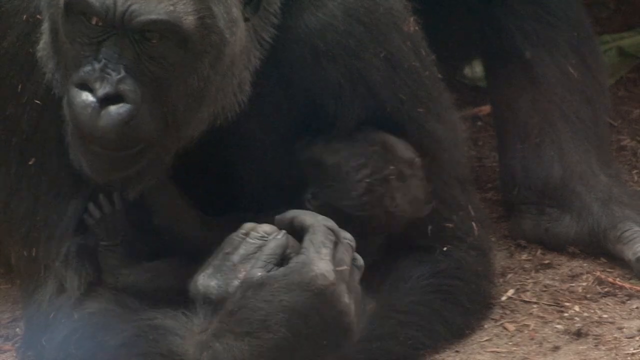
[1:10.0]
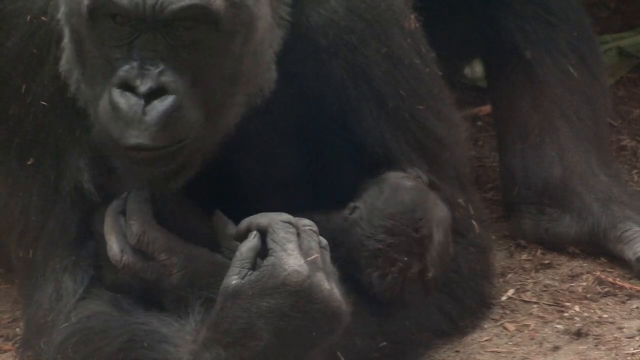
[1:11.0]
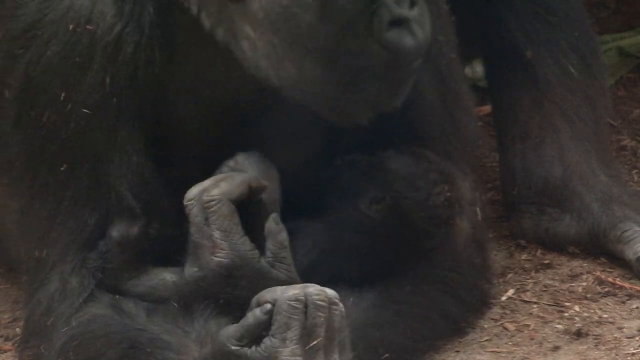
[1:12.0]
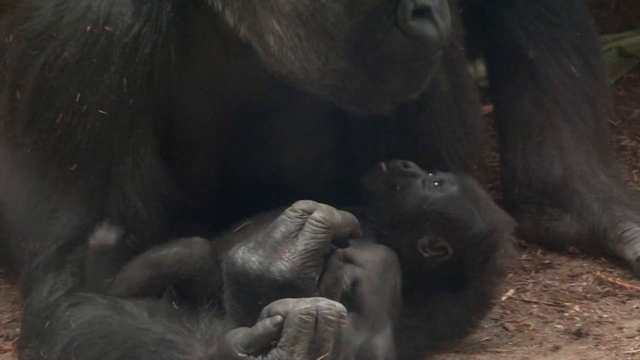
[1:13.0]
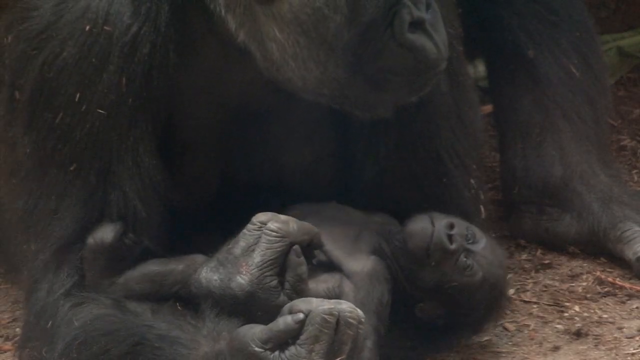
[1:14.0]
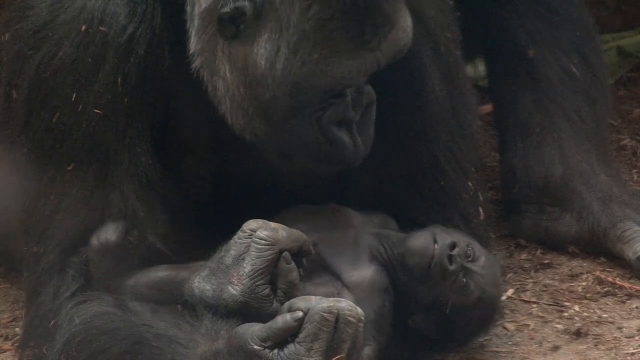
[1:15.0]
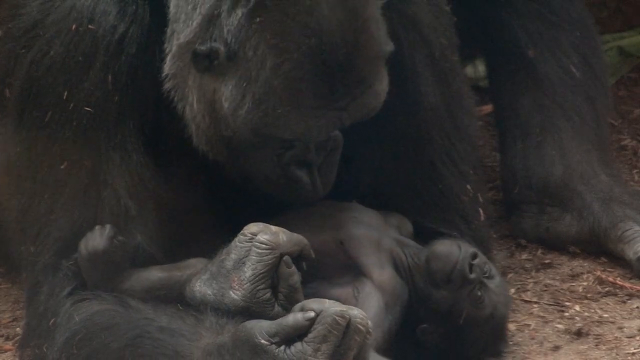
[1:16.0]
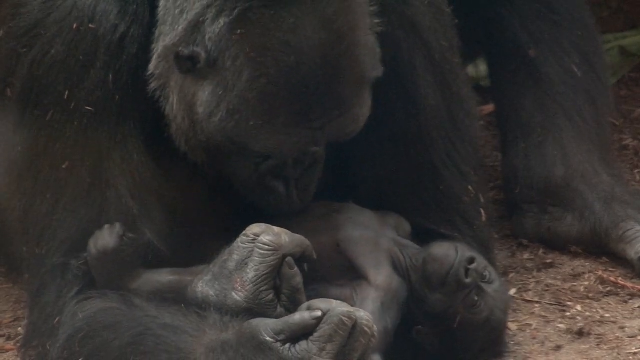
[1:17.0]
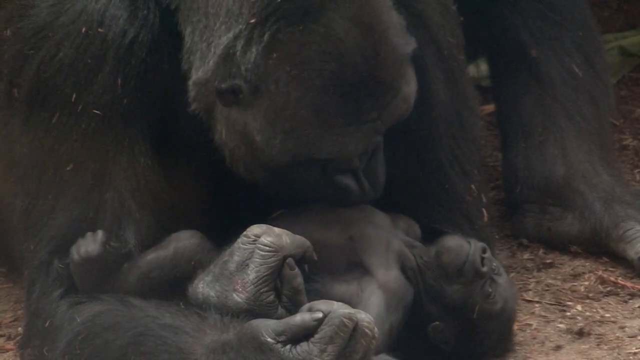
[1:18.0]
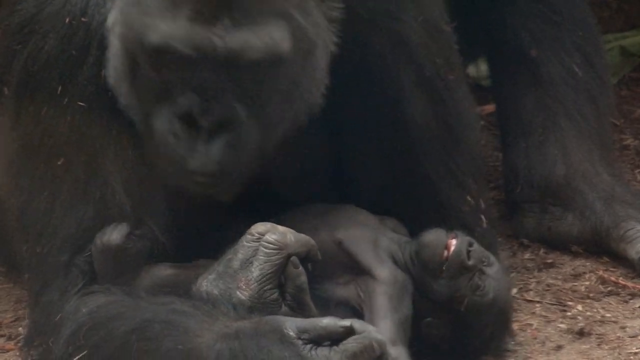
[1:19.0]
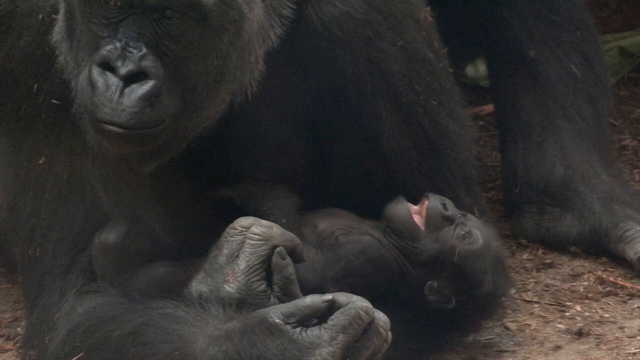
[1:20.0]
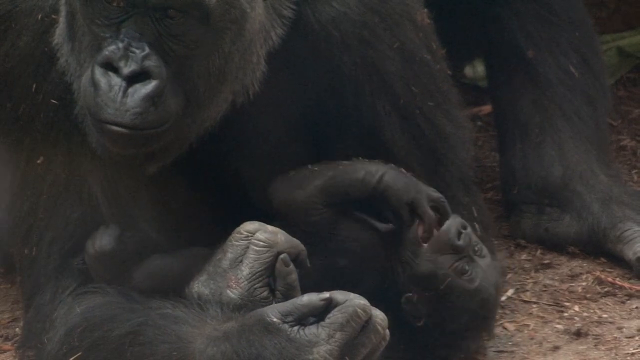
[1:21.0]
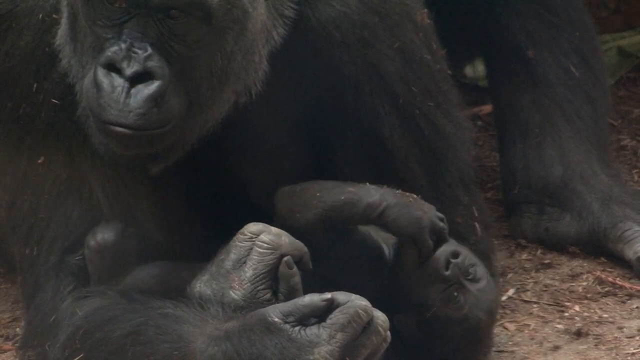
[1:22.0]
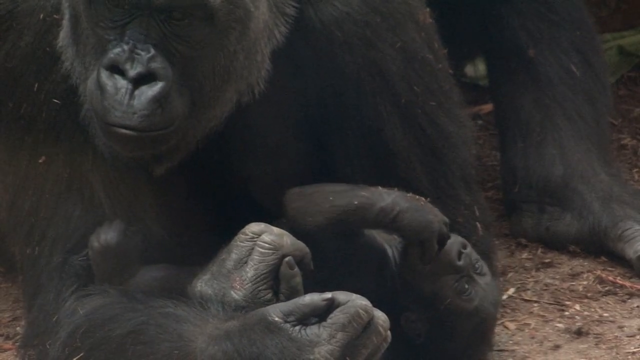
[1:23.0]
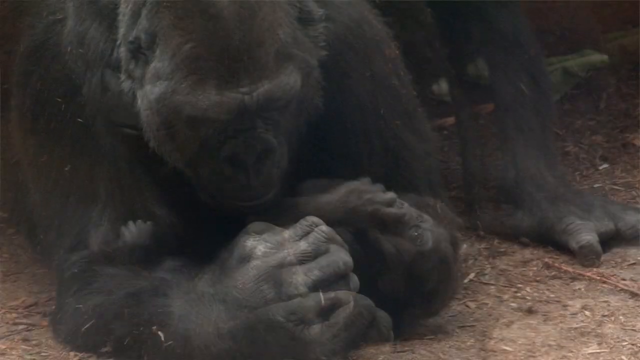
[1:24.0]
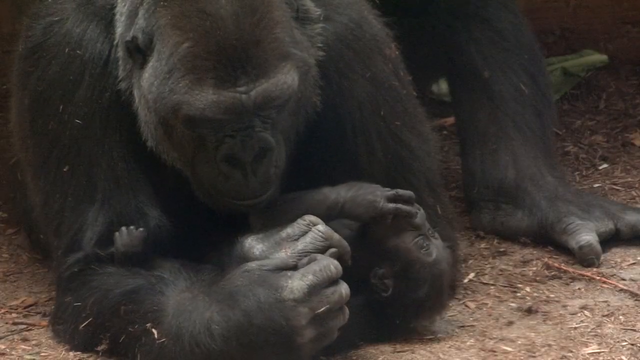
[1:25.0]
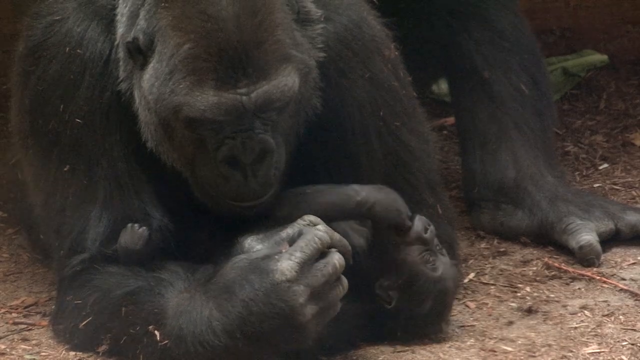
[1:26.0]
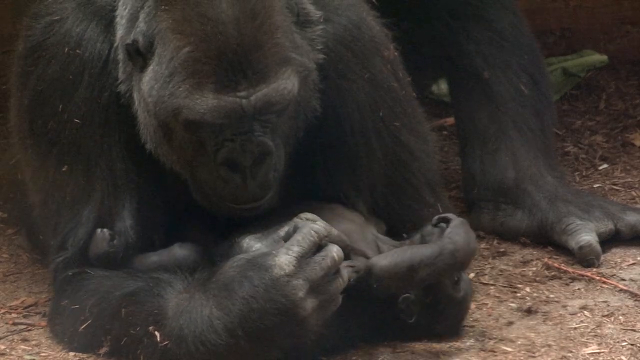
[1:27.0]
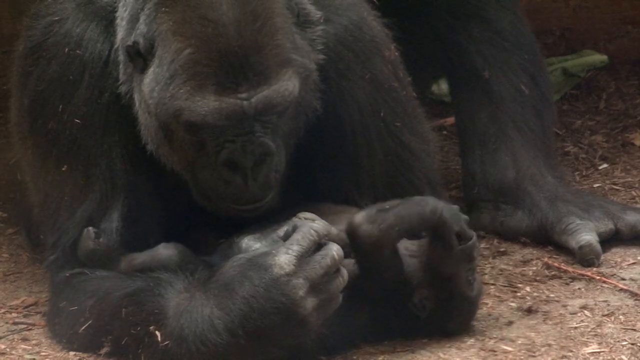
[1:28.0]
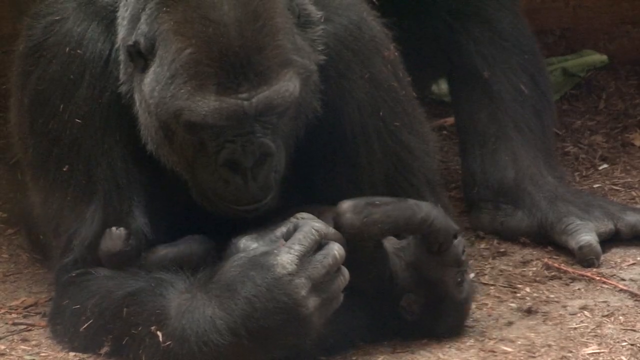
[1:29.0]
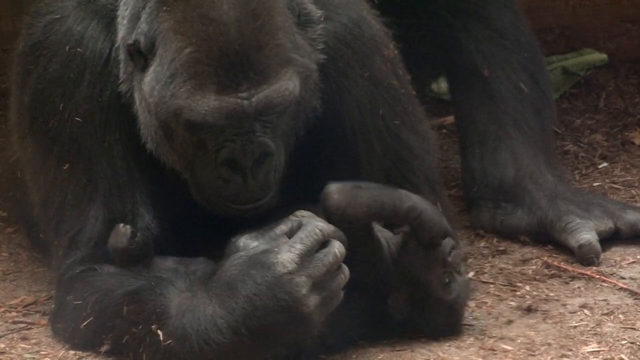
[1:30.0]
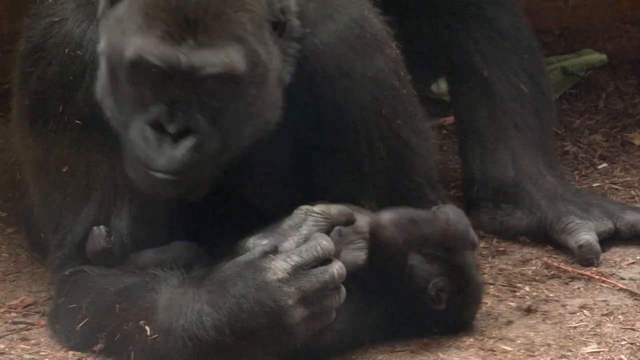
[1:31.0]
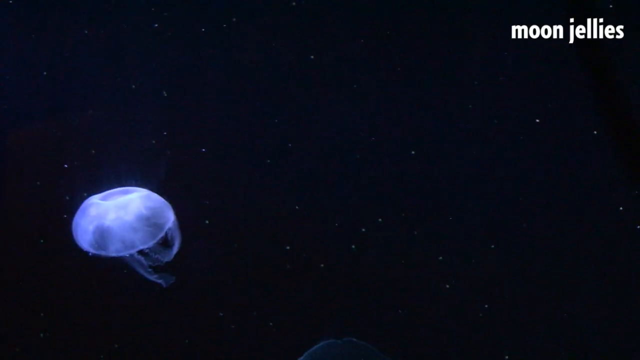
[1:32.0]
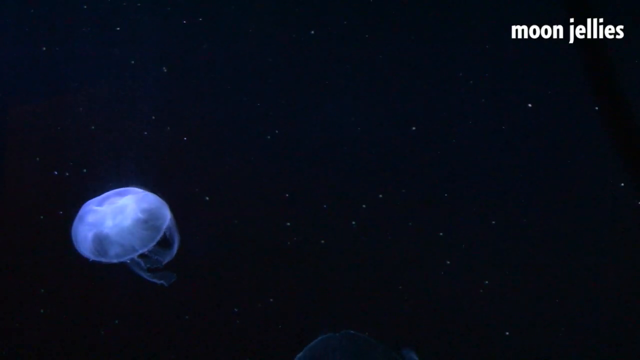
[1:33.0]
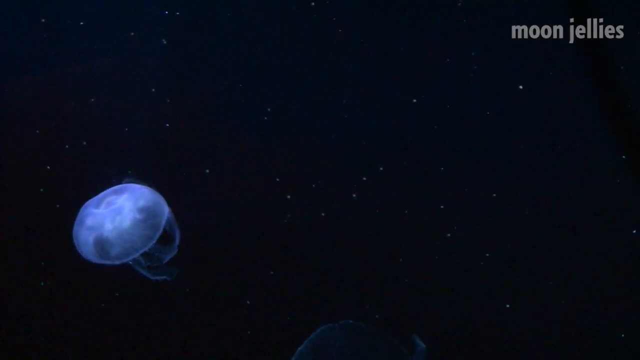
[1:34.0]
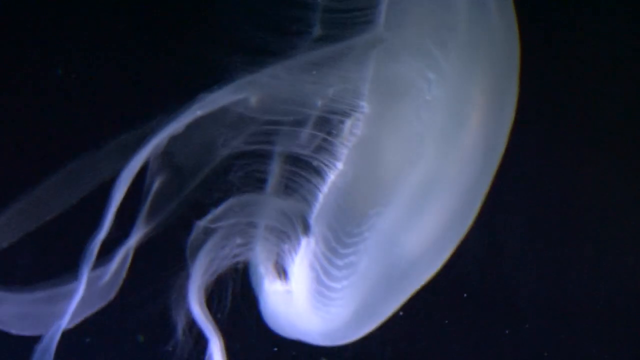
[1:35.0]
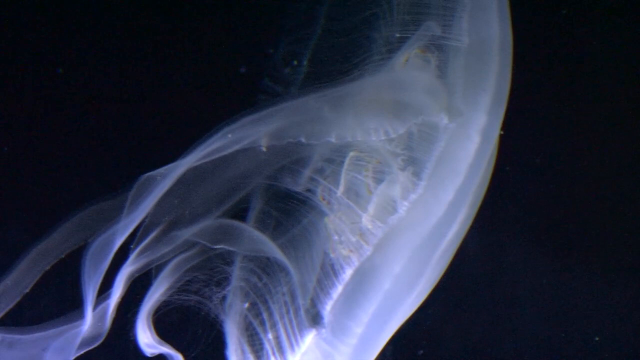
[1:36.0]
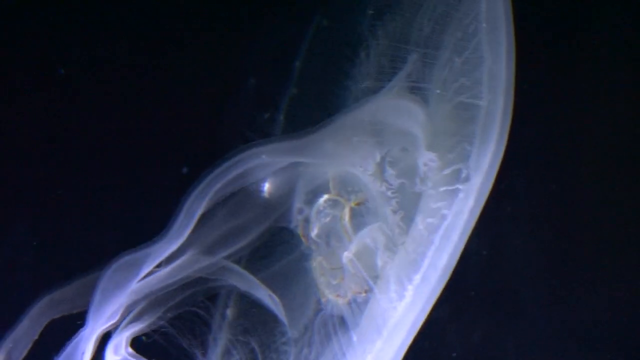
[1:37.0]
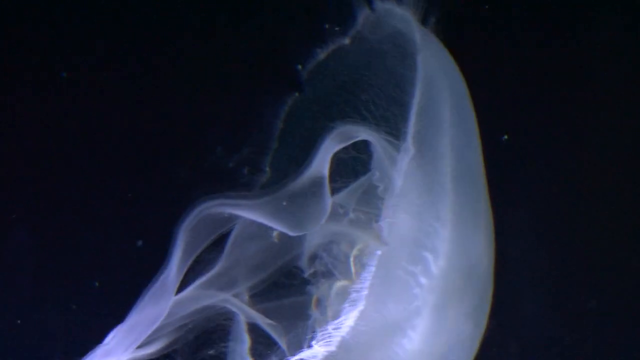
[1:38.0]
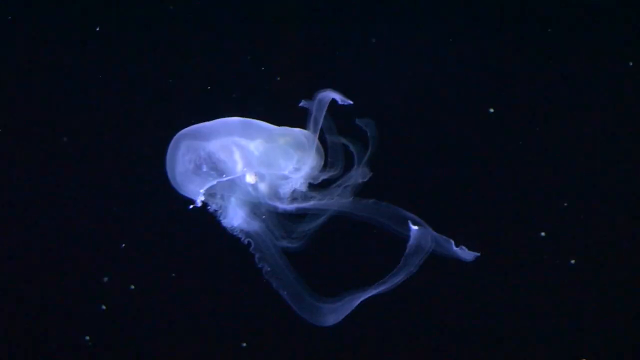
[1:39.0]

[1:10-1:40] The mother gorilla embraces the small baby gorilla, which lies on its back in her arms, looking up toward the sky and upside down, while she holds his side and appears to comfort him. The video then transitions to moon jellies swimming underwater in a dark environment.